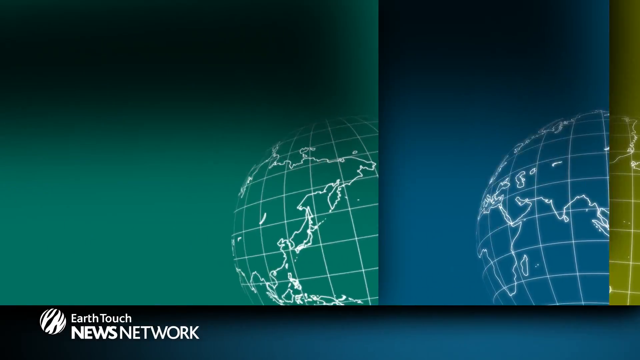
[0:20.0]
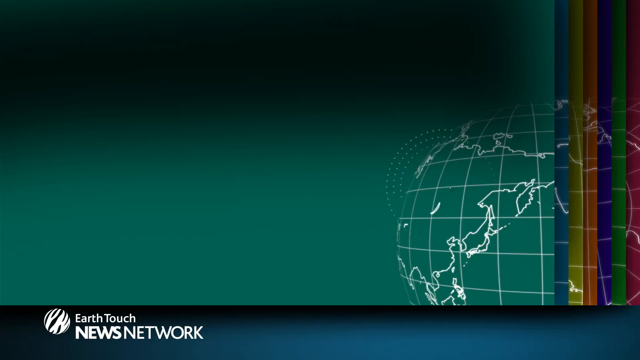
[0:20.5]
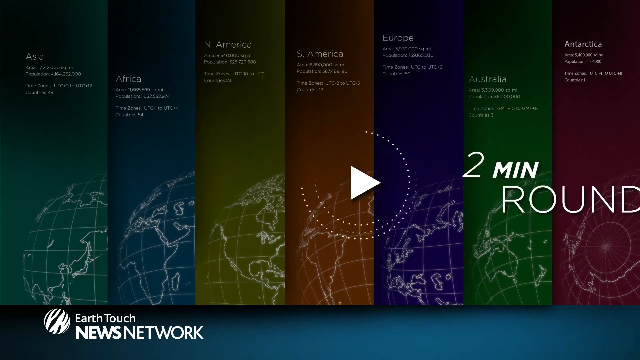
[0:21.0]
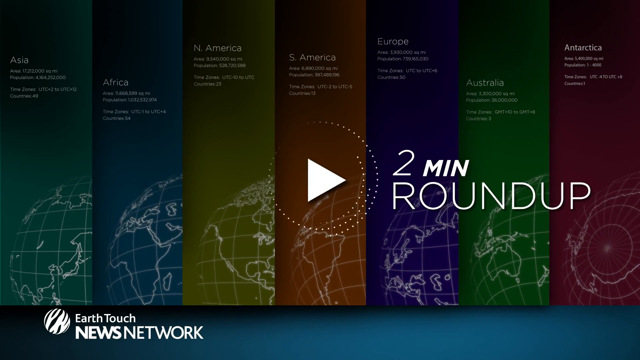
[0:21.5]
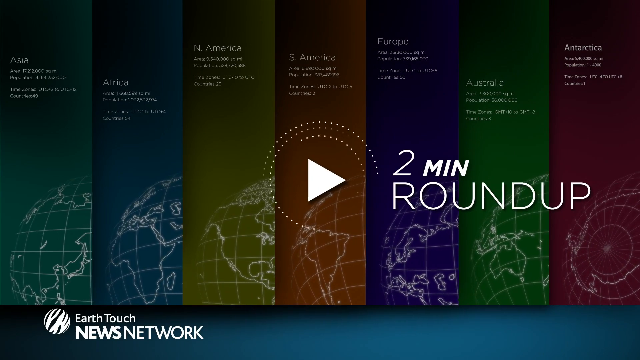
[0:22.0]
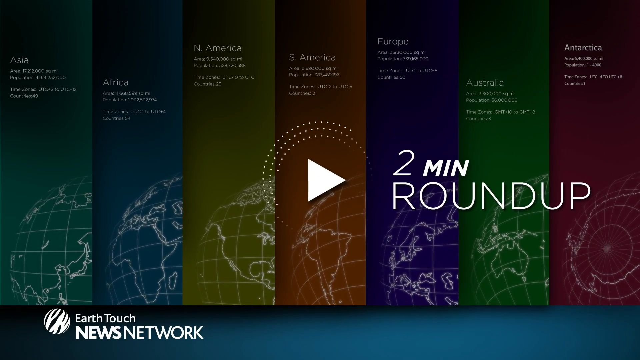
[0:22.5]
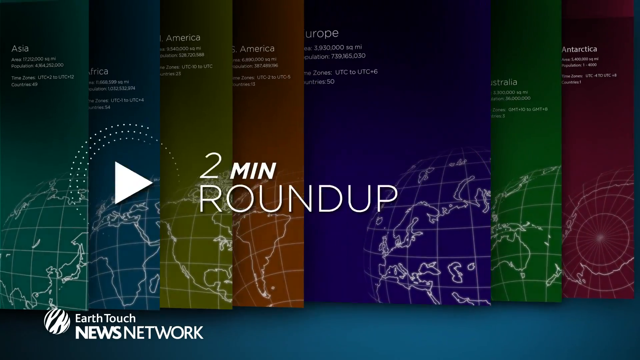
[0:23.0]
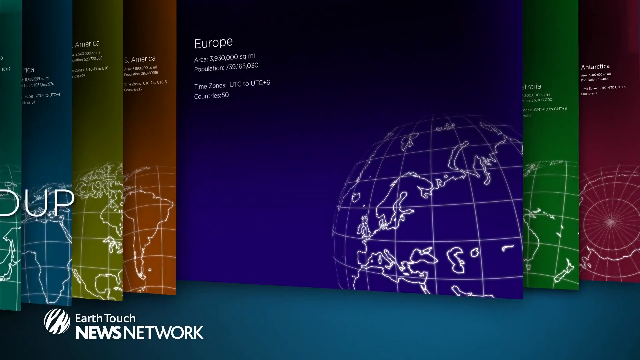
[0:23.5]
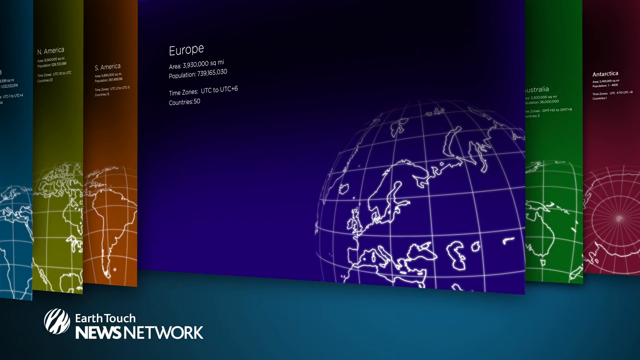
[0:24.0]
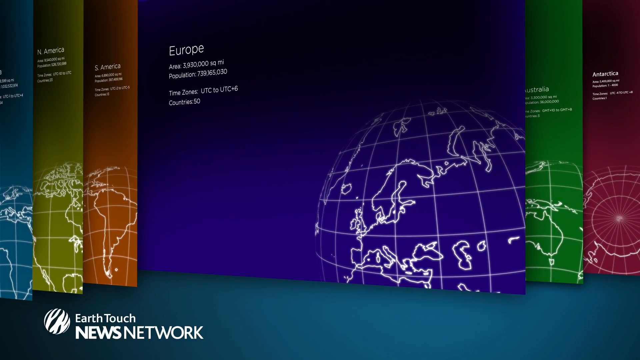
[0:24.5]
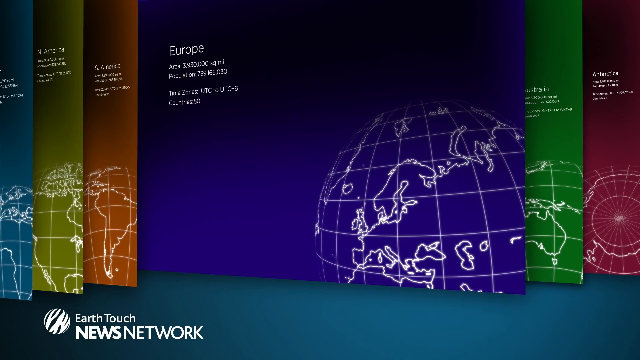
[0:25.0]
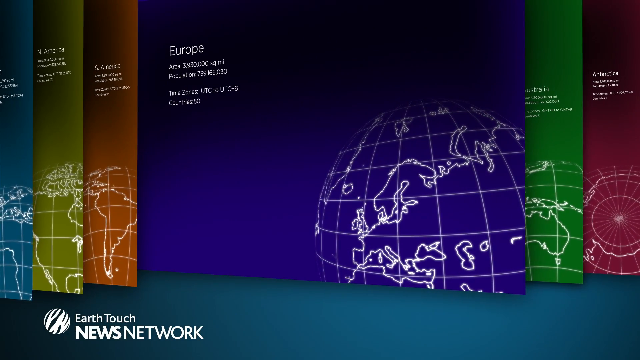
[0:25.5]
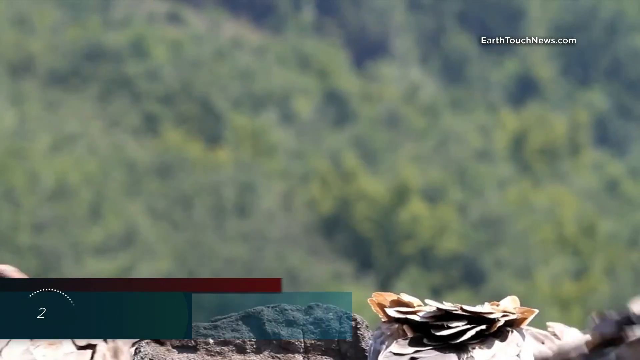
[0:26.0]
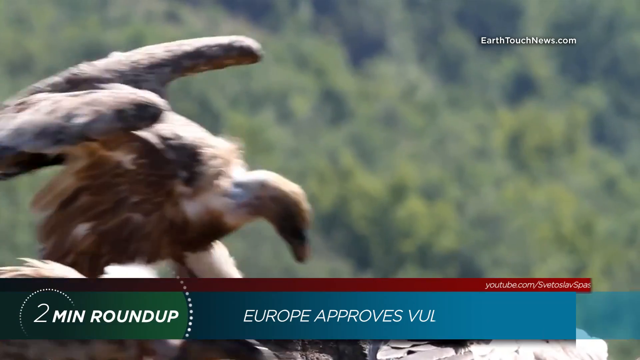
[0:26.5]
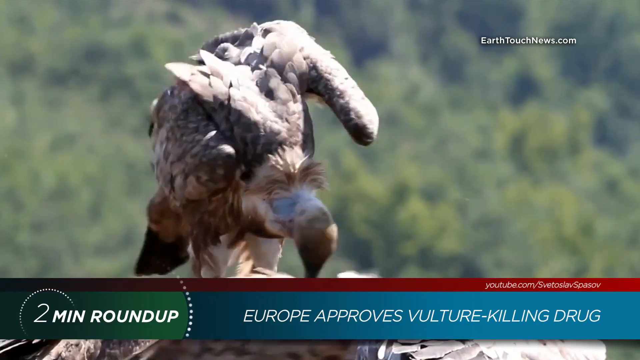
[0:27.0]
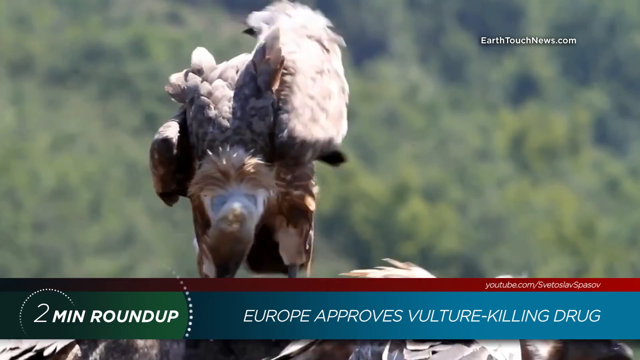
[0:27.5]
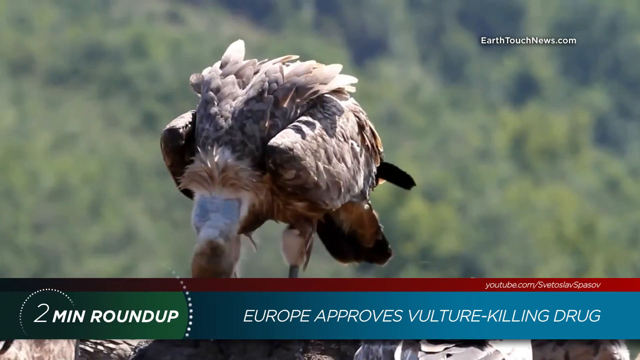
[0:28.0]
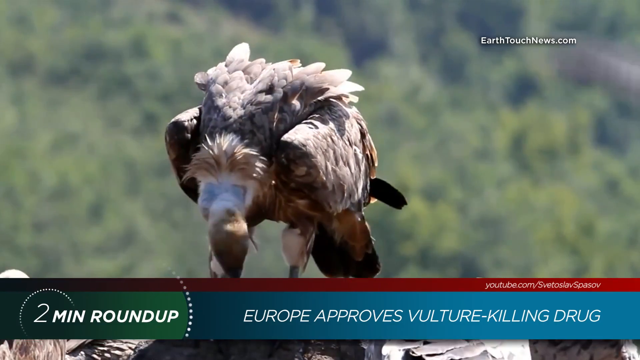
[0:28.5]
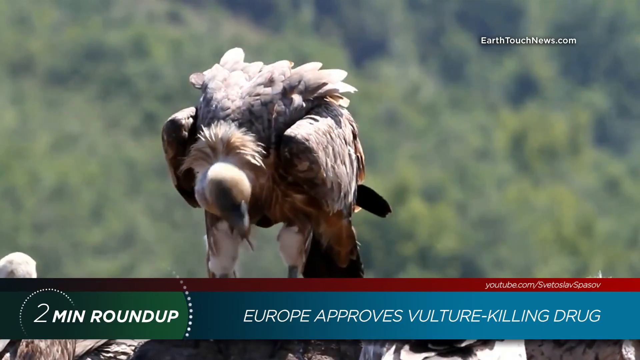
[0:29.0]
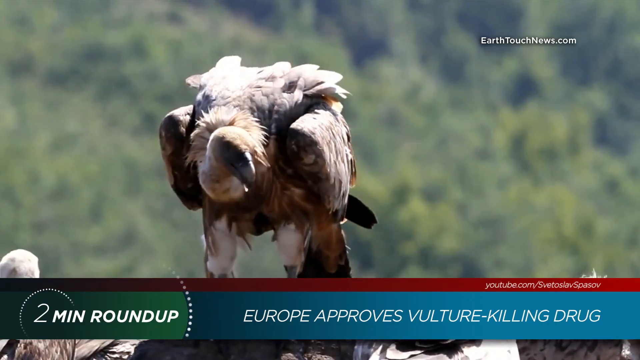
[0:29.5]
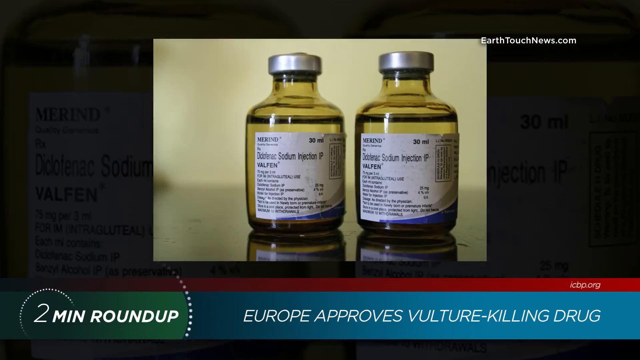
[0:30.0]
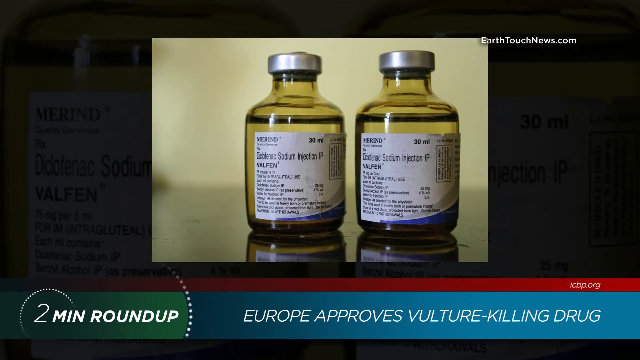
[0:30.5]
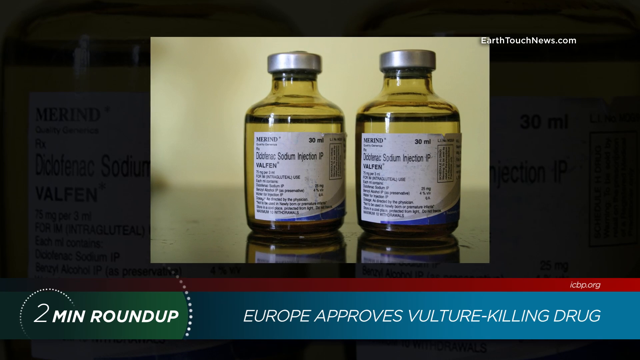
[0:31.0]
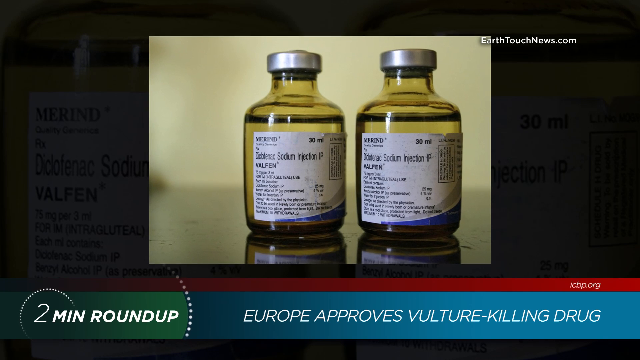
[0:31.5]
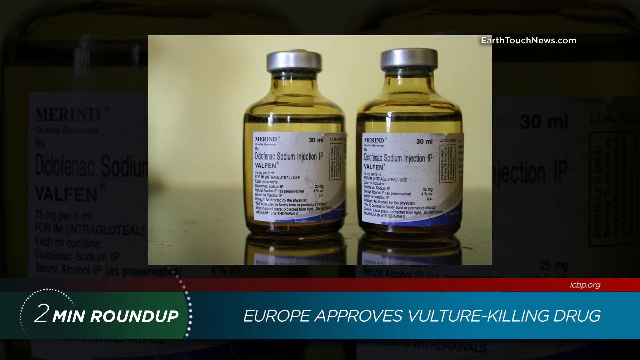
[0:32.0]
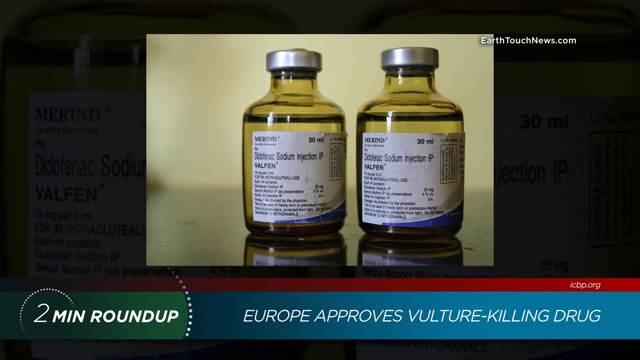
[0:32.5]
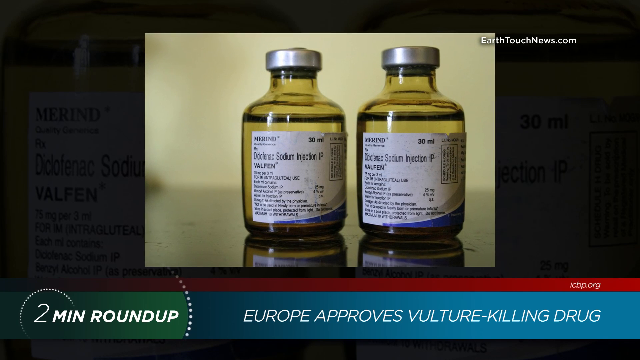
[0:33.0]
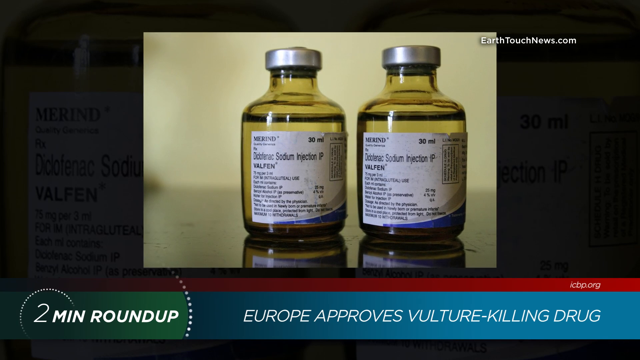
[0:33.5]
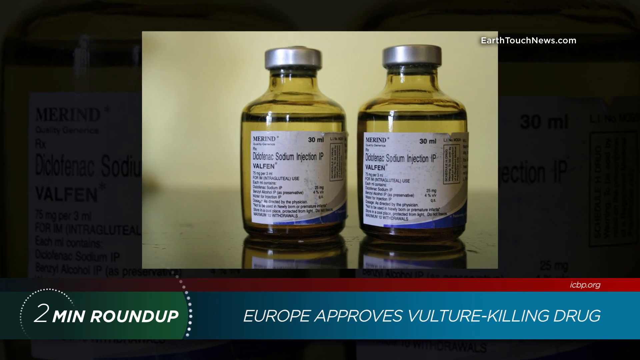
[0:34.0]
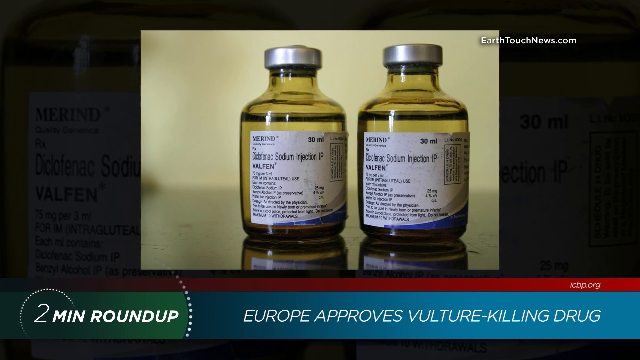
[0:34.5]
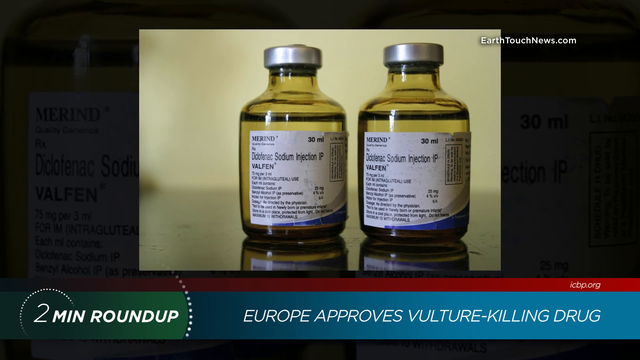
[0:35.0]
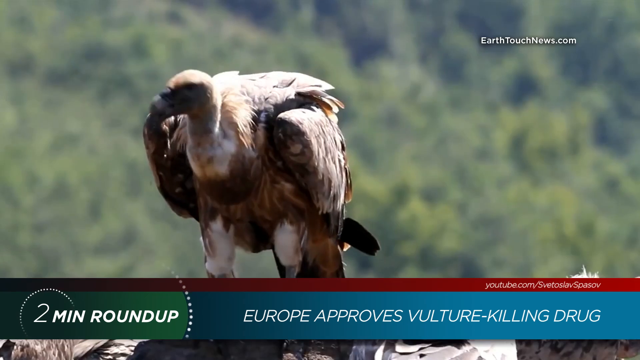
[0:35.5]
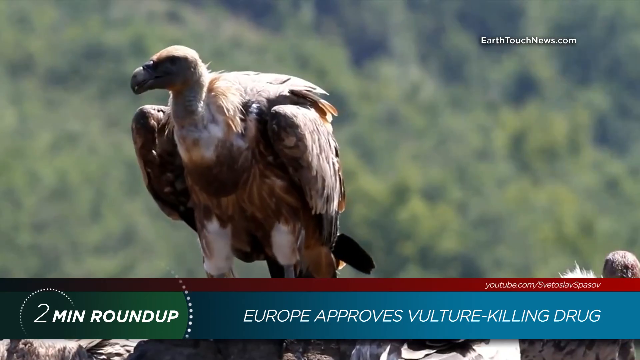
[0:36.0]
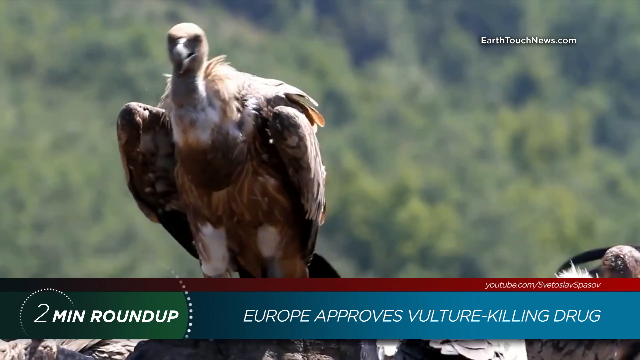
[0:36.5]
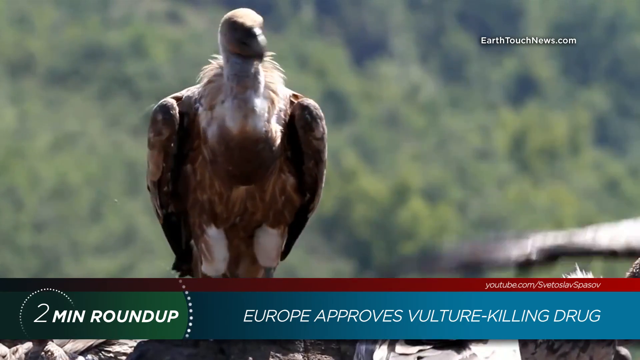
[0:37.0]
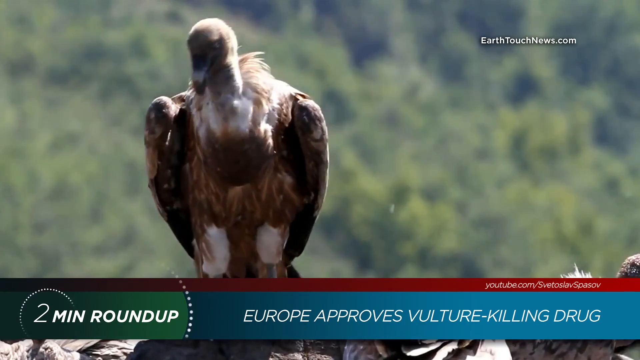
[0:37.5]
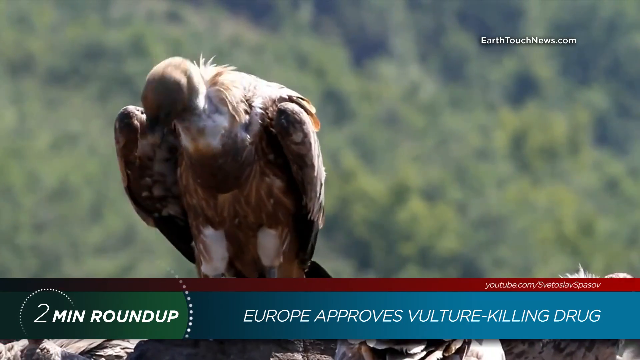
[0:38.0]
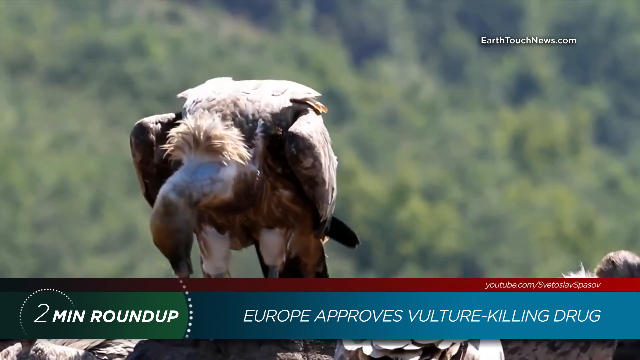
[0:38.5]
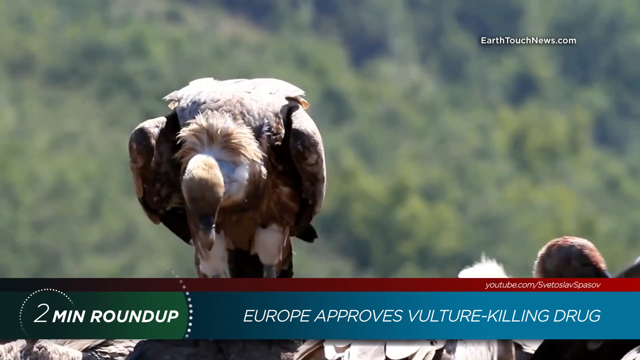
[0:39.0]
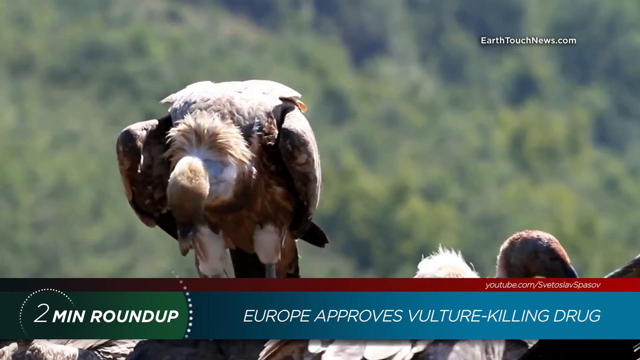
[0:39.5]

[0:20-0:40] A graphic presents different countries, such as Asia, Africa, North America, South America, Europe, Australia and Antarctica, in a chart. "Two-minute roundup" appears on the screen. The view goes to Europe, which takes up the main part of the screen in purple, and then to "Europe approves vulture killing drug", showing a vulture with another group of vultures. Two bottles of sodium injection appear, and the view kind of zooms in on the image, getting closer and closer. It returns to the vultures: one is prominent, another is seen flapping its wings to the right, and the main vulture kind of looks down and then turns its head to the right. The segment ends with the screen of different colored countries, though this time the countries cannot be seen: one part of the screen is green and shows a globe, another to the right is kind of blue with a globe, and to the far right part of a yellow globe is visible. "Earth Touch News Network" appears at the bottom.